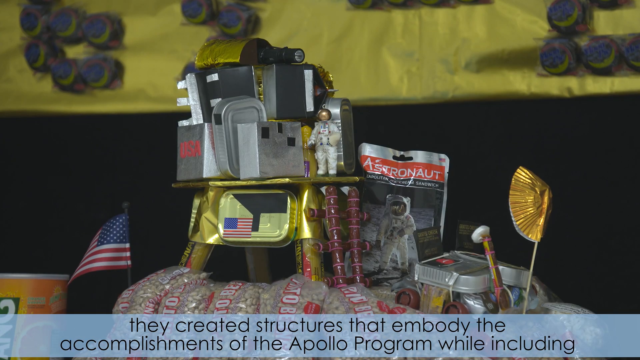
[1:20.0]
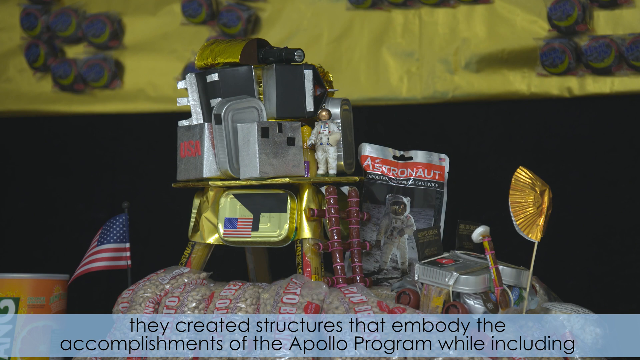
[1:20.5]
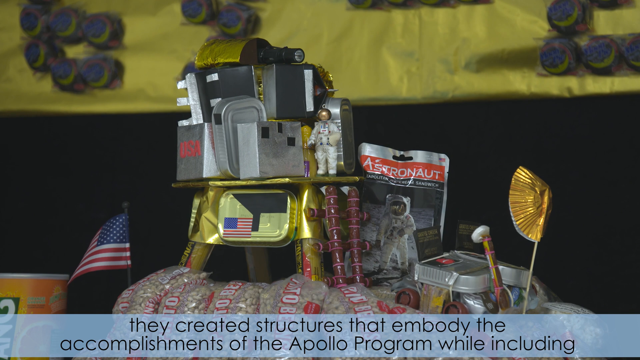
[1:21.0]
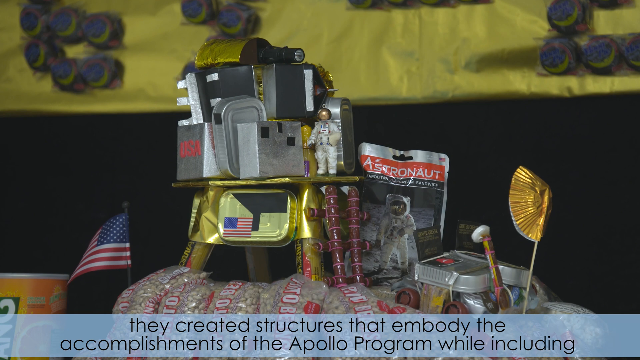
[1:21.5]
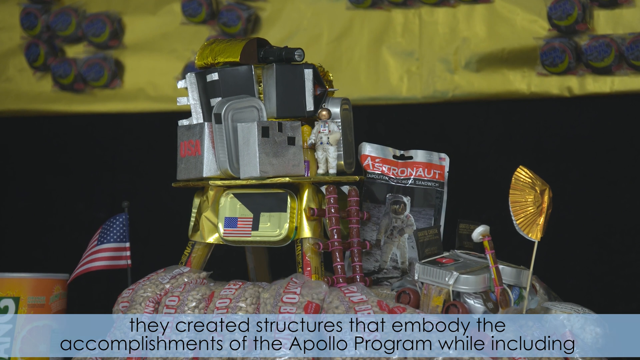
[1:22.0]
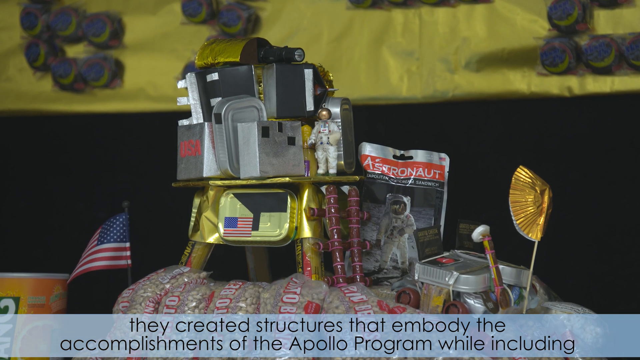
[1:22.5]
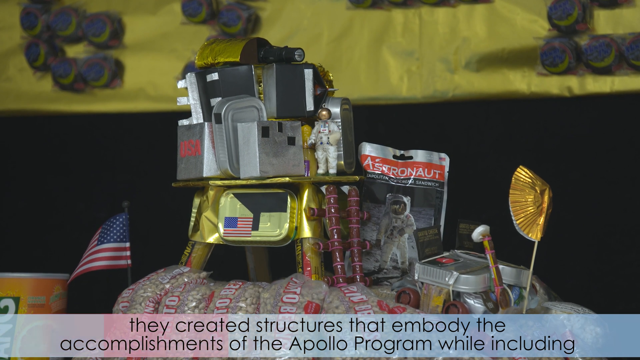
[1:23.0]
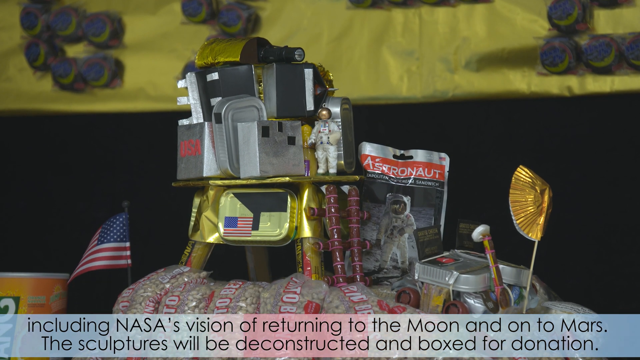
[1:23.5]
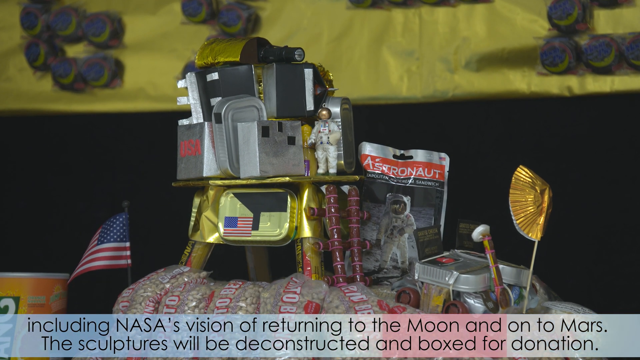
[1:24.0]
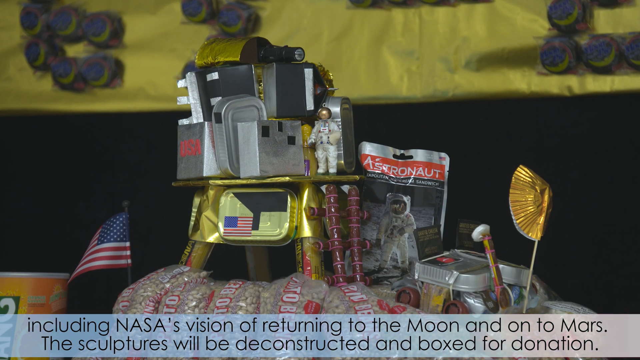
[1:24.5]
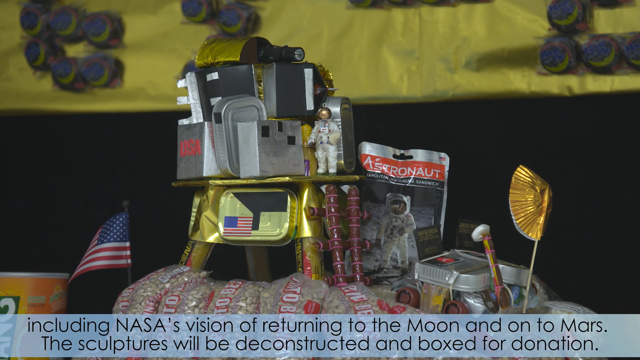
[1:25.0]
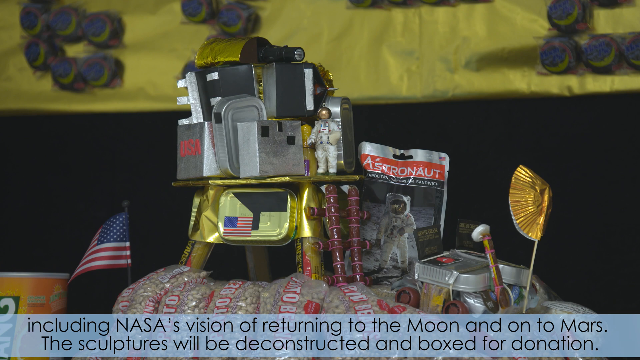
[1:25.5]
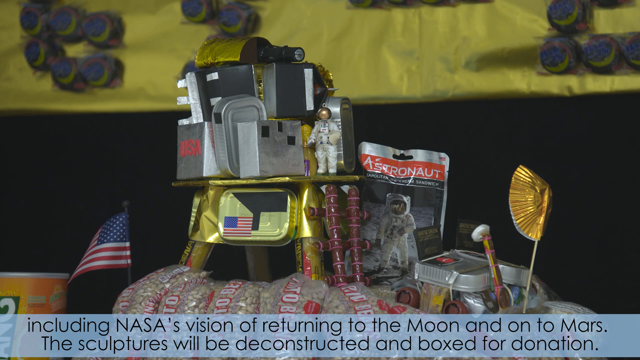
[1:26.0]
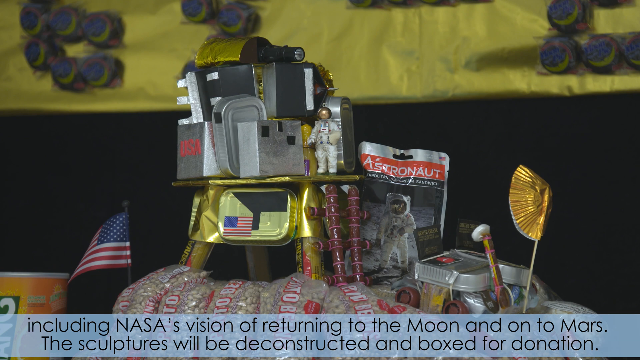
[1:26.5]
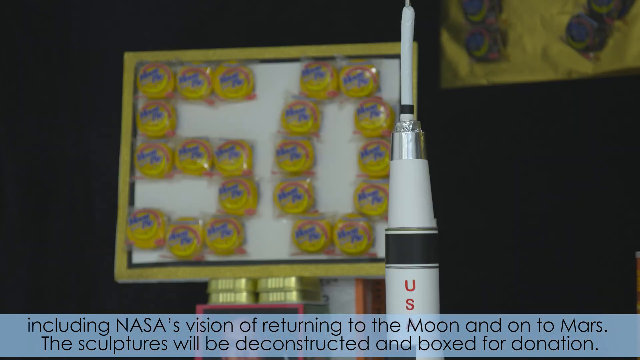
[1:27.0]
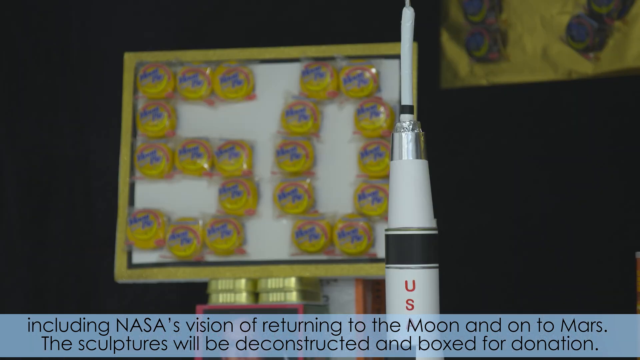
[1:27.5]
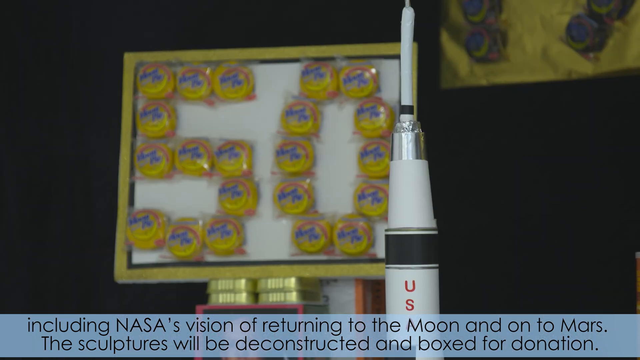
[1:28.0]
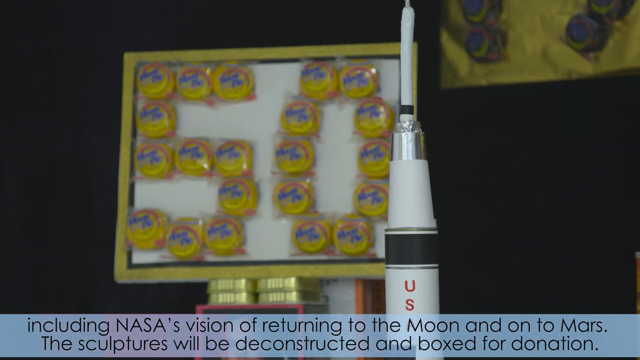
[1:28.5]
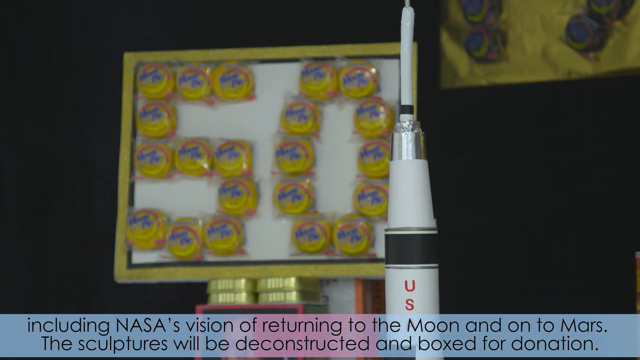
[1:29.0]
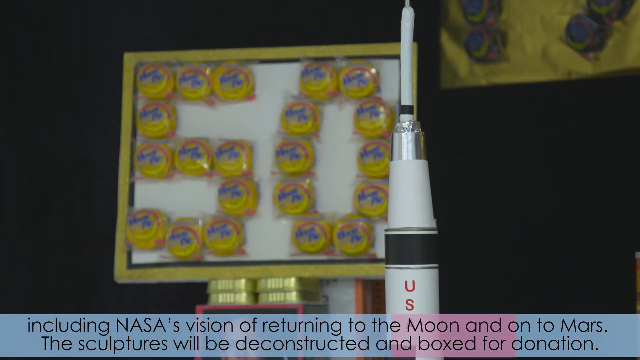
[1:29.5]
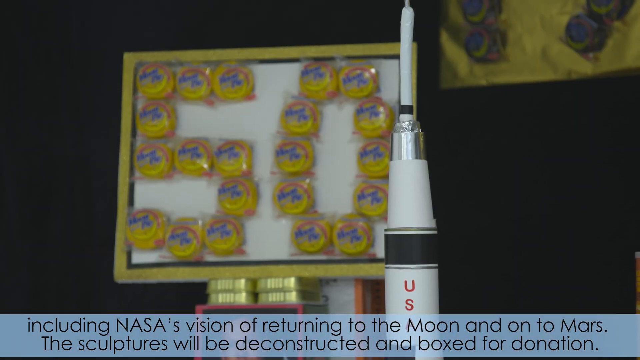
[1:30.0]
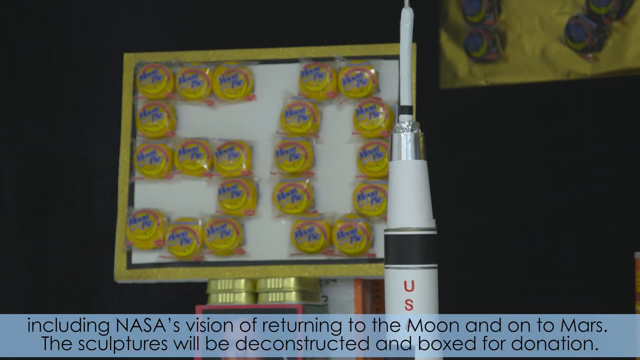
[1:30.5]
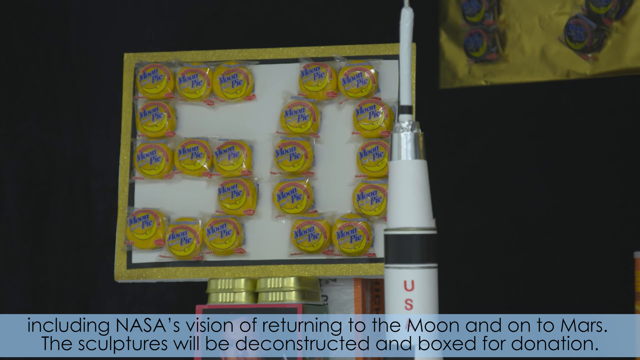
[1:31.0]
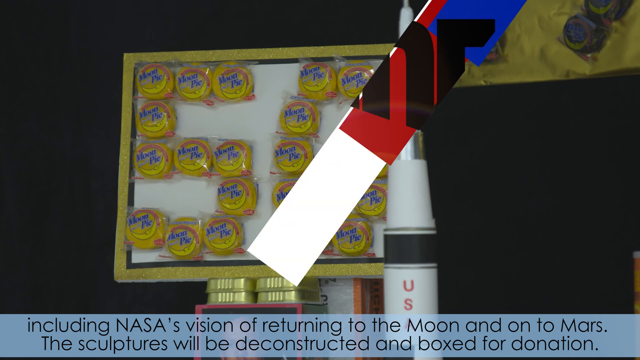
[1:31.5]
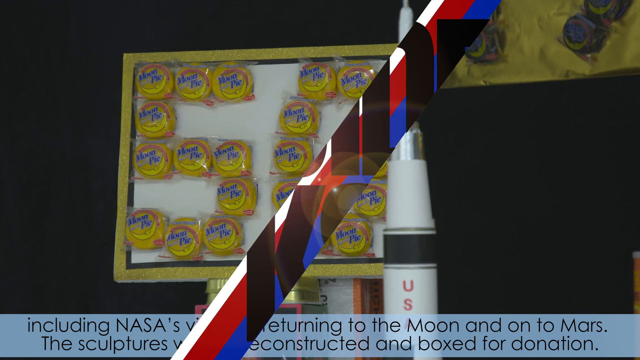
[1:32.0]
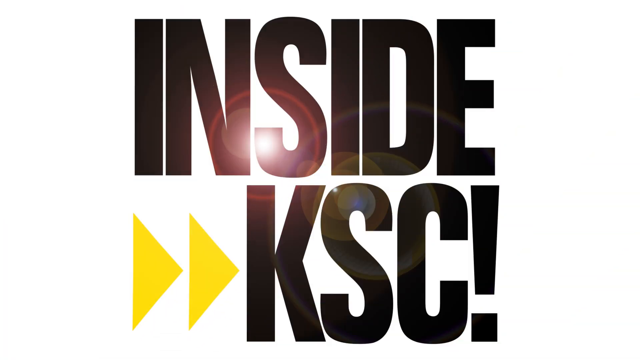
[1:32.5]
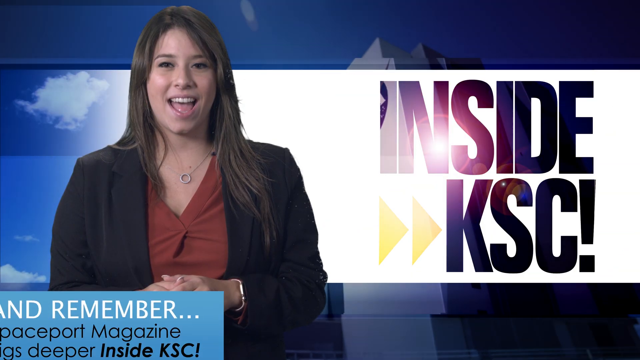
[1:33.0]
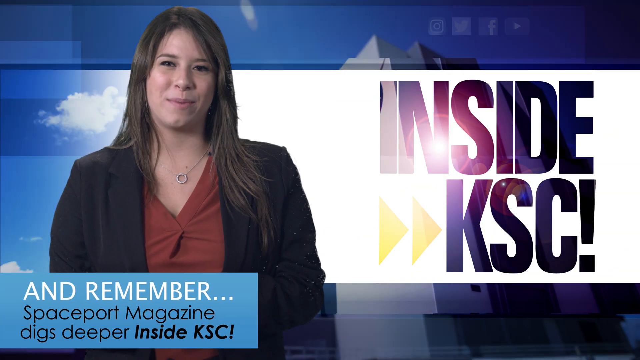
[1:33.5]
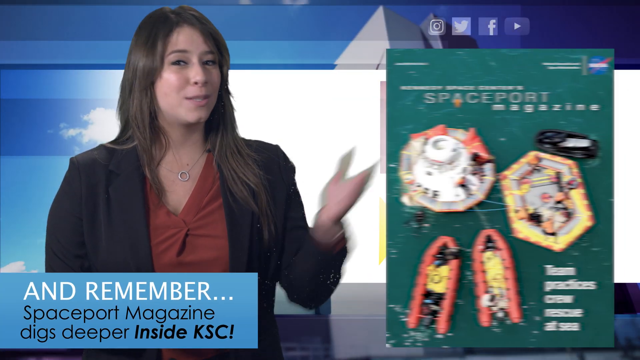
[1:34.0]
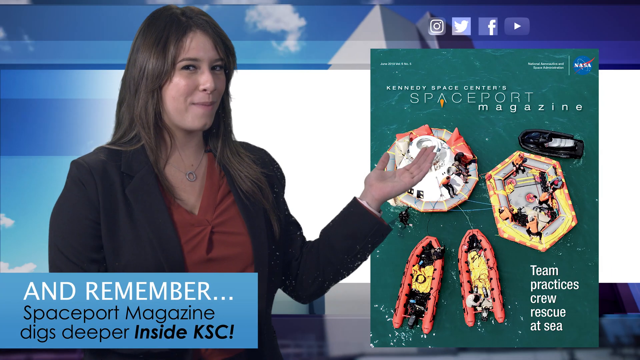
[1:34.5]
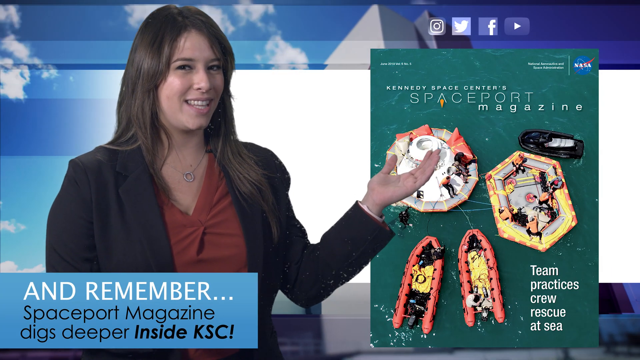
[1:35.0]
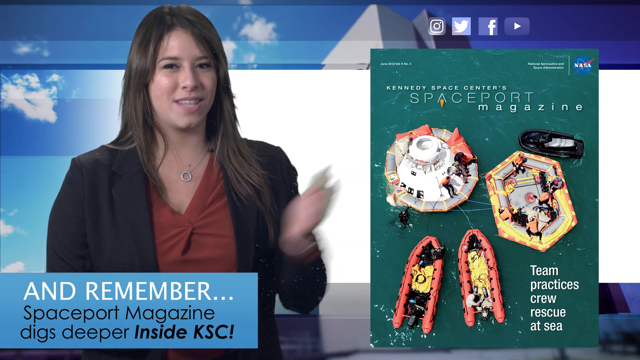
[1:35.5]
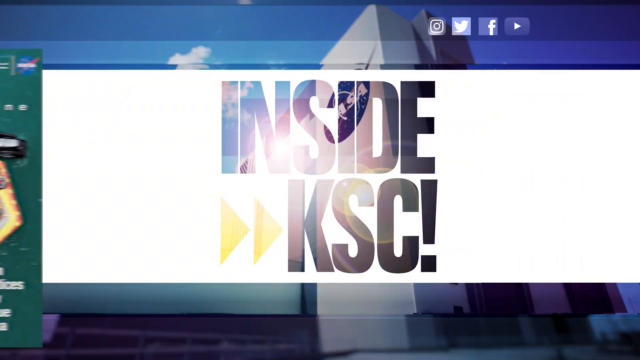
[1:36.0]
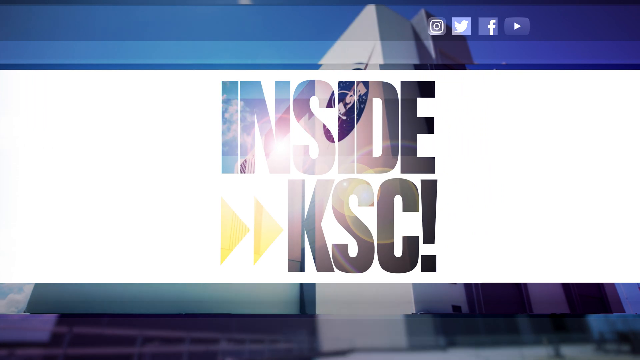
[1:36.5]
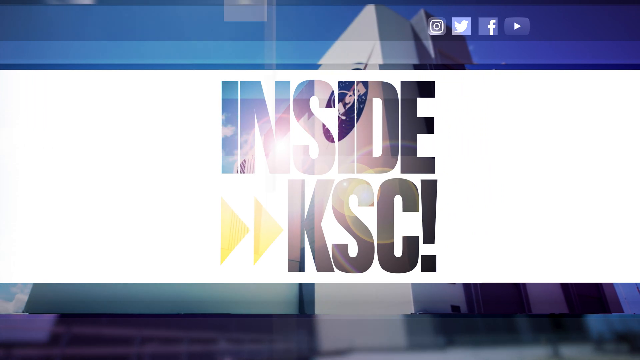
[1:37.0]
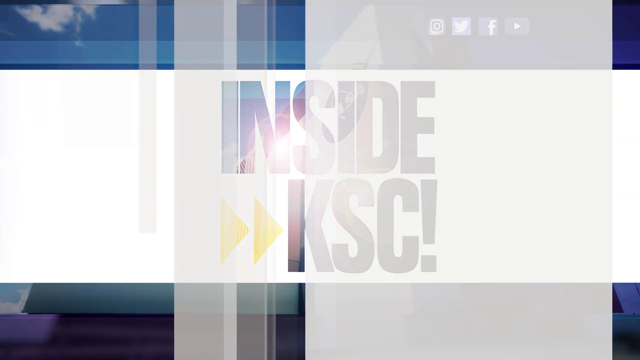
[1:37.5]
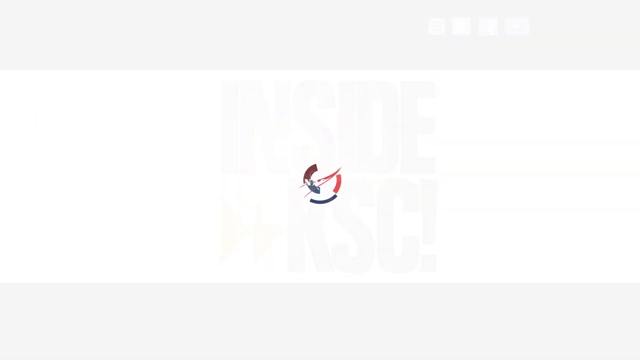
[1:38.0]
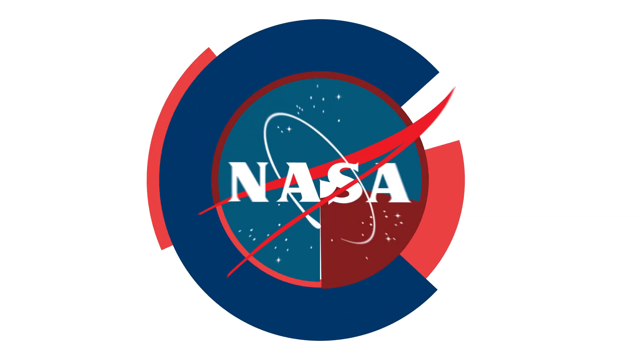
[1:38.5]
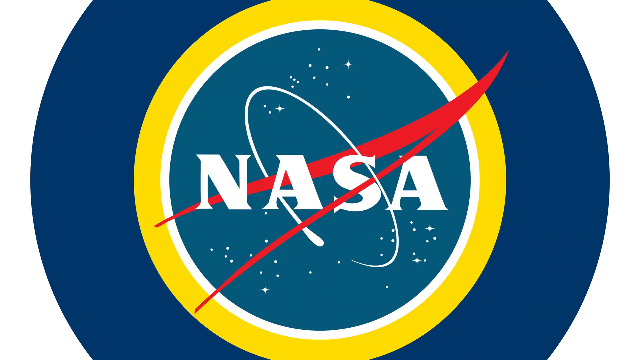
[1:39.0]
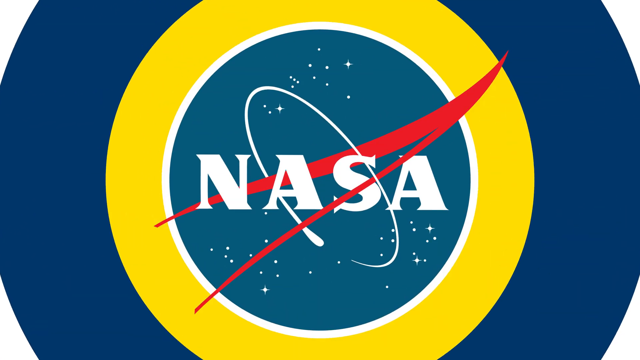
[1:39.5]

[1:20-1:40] The top of a display made of various bags of garbanzo beans is shown, with two pillars coming together to form a platform above the garbanzo bean pyramid, holding various metal tins and a small figurine of an astronaut. Text at the bottom continues with "NASA's vision of returning to the moon and on to Mars" and then "The sculptures will be deconstructed and boxed for donation". The video zooms in on a board that reads the numbers 5-0 with moon pies in their plastic packaging. A title card reading "Inside KSC" serves as a transition. A woman is talking, visible from the torso upward, with her arms folded in front of her. Text in the bottom left corner reads "and remember, Spaceport Magazine digs deeper inside KSC". A title card appears on the right next to the woman, and she motions toward it with her left hand, palm facing upward. The card reads "Kennedy Space Center Spaceport Magazine team practices crew rescue at sea" and shows multiple bright boats on a green body of water. The video transitions back to the title card reading "Inside KSC", then the screen flashes white and the NASA logo appears.